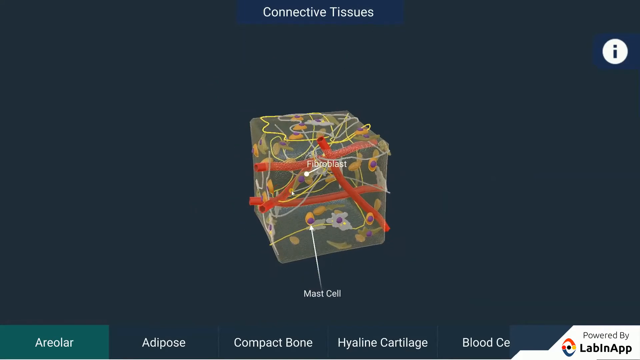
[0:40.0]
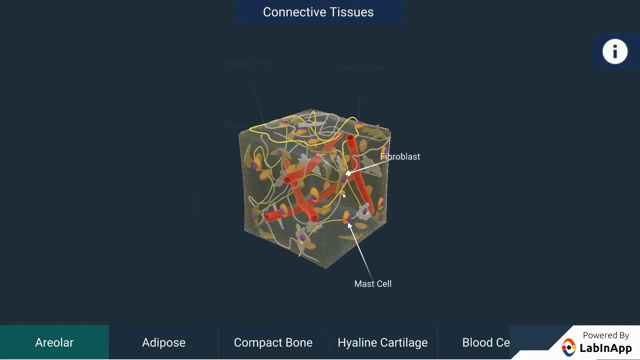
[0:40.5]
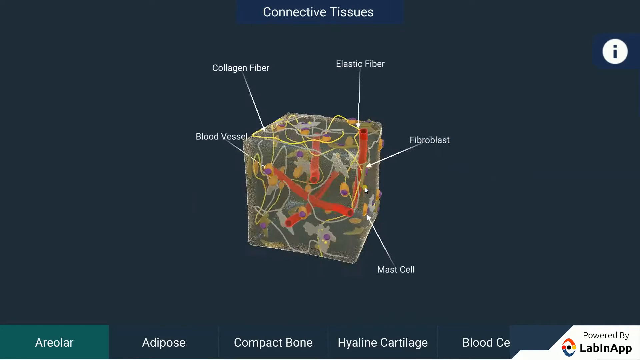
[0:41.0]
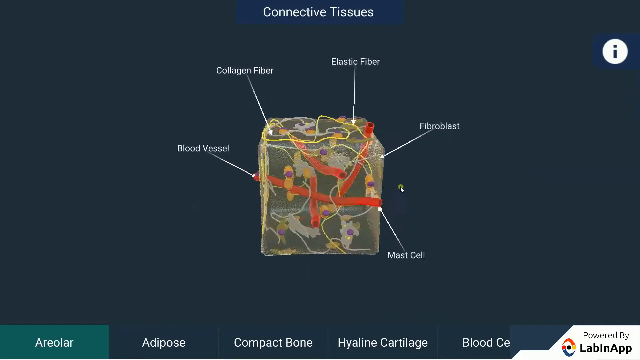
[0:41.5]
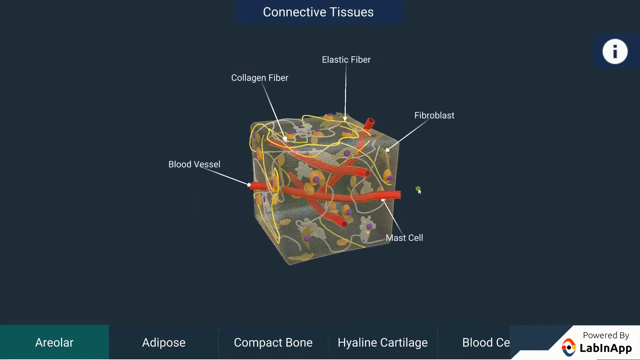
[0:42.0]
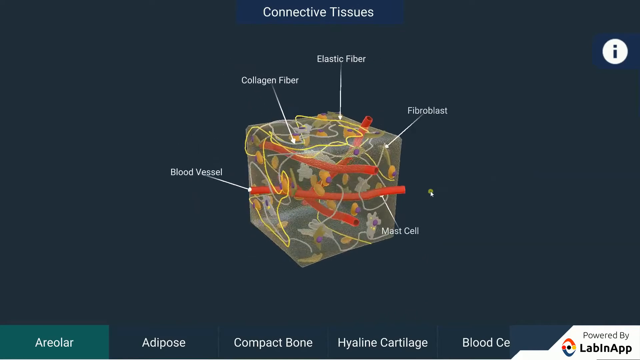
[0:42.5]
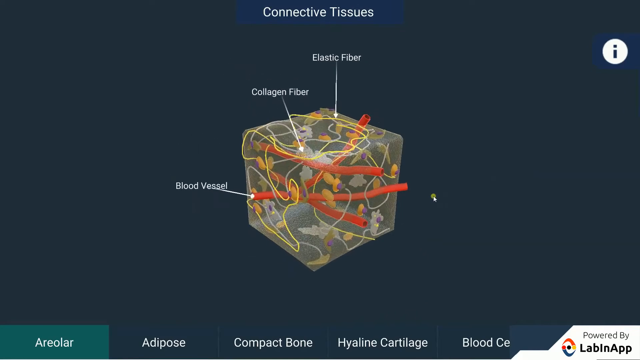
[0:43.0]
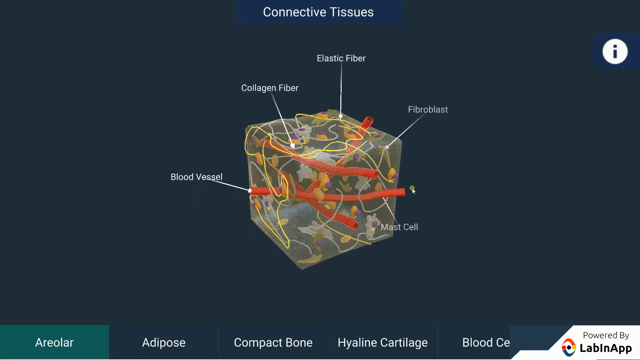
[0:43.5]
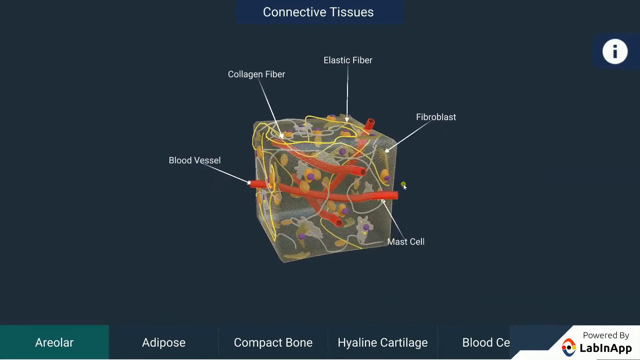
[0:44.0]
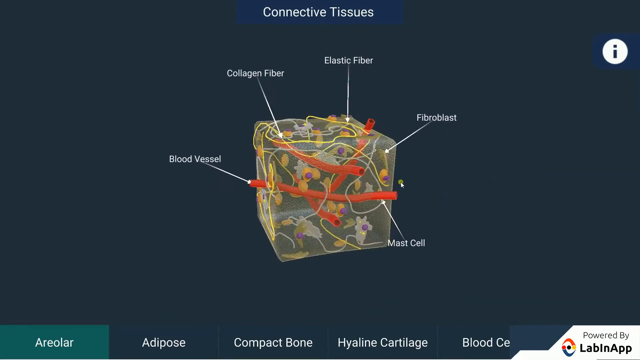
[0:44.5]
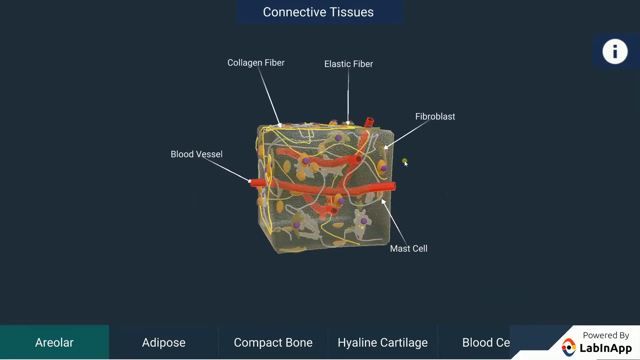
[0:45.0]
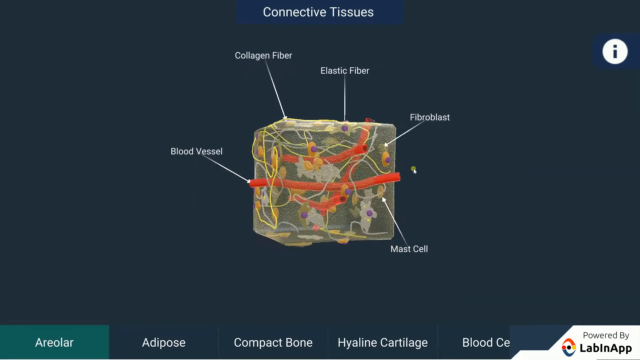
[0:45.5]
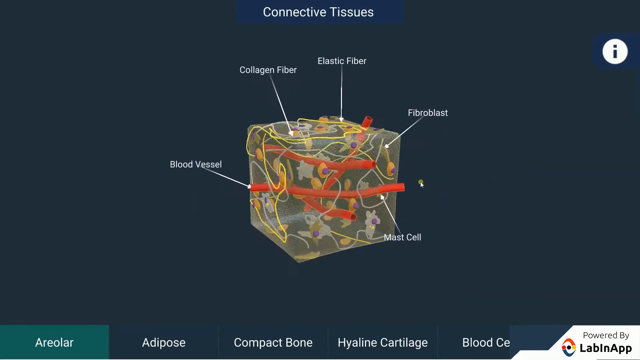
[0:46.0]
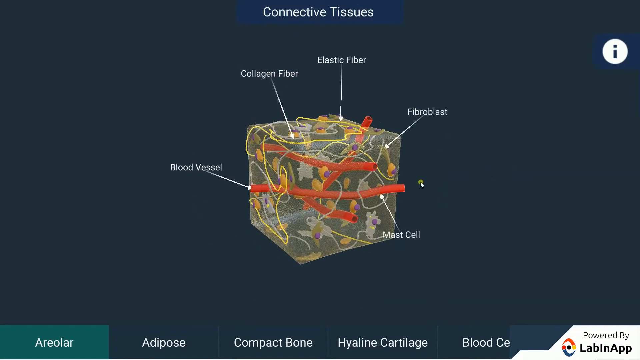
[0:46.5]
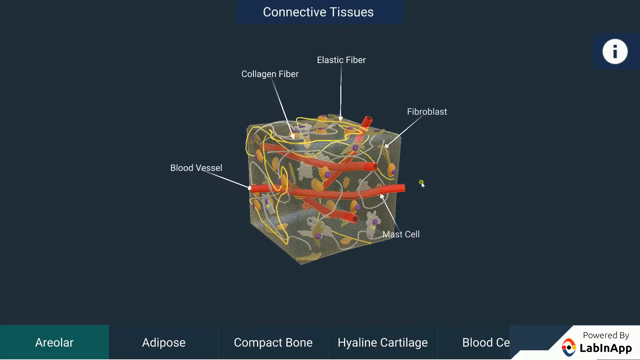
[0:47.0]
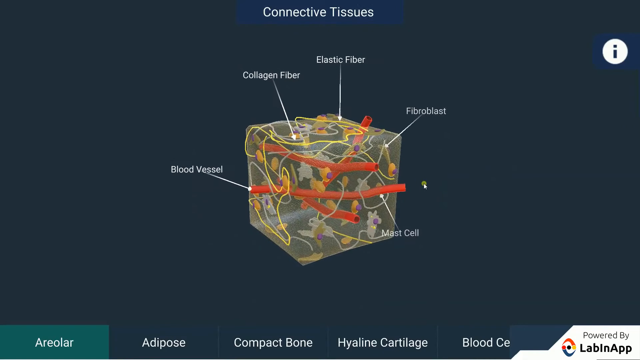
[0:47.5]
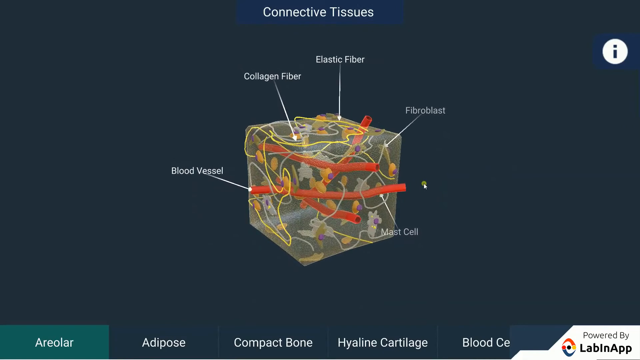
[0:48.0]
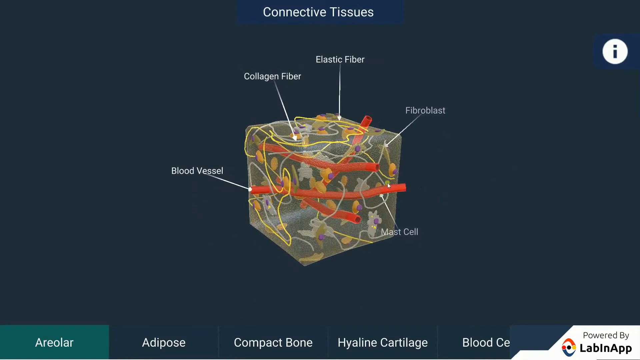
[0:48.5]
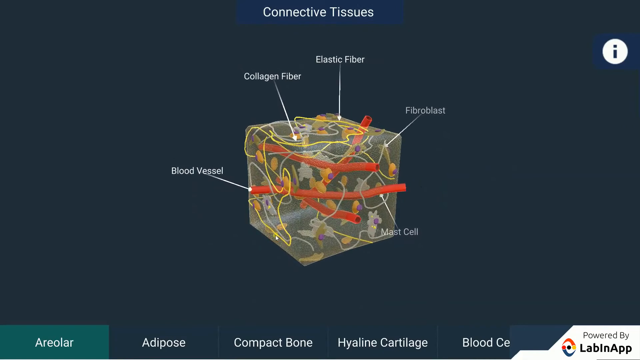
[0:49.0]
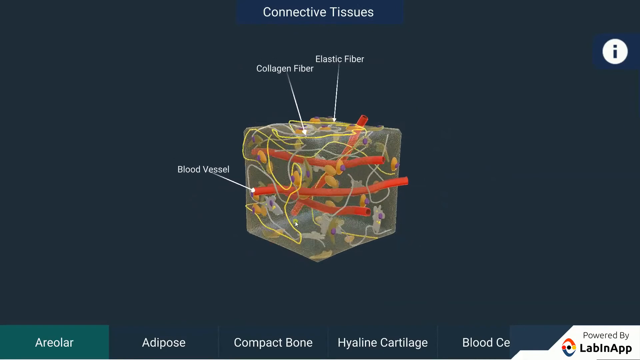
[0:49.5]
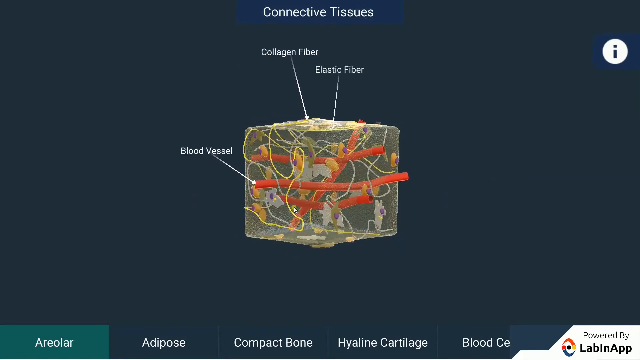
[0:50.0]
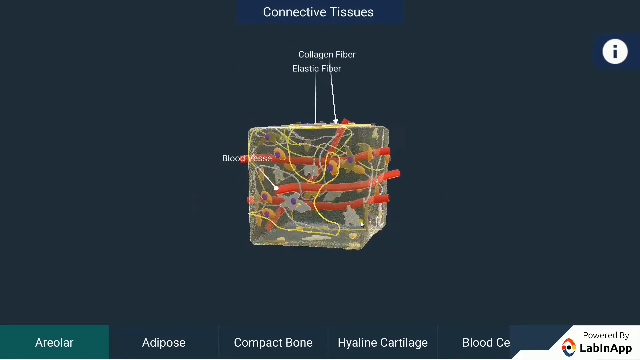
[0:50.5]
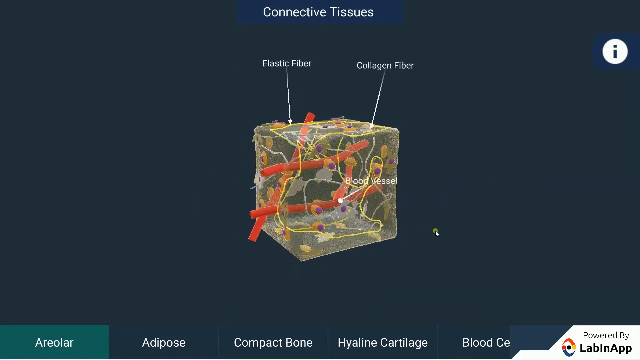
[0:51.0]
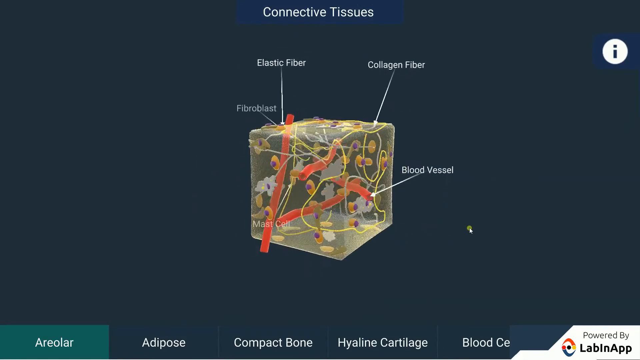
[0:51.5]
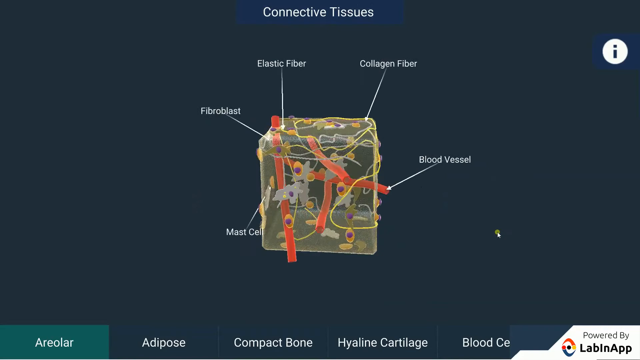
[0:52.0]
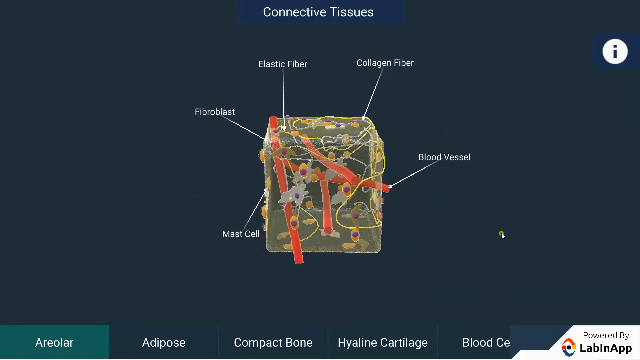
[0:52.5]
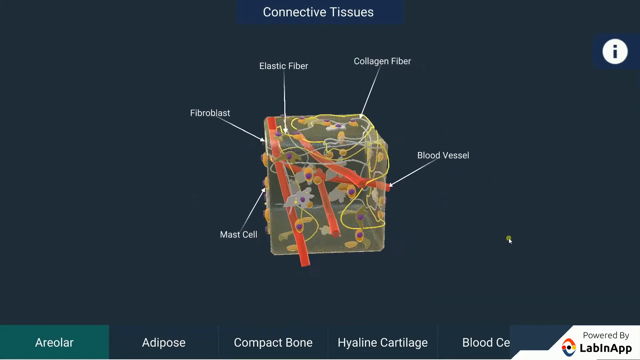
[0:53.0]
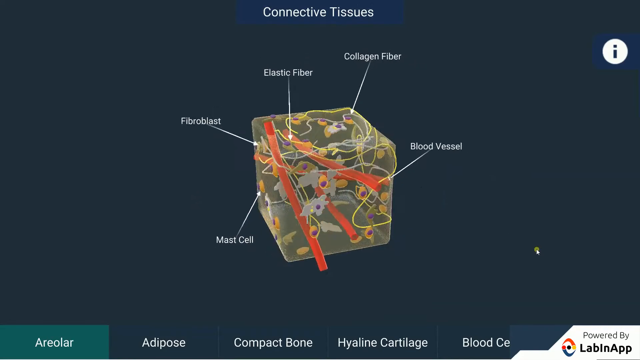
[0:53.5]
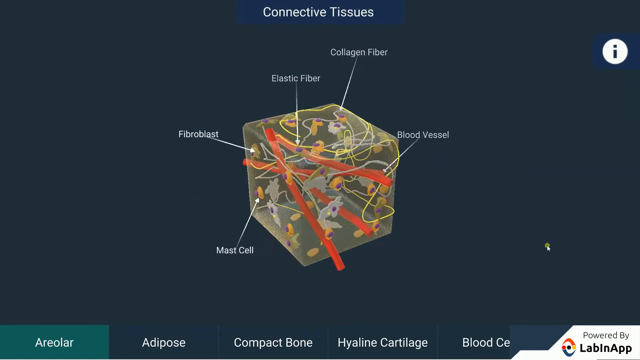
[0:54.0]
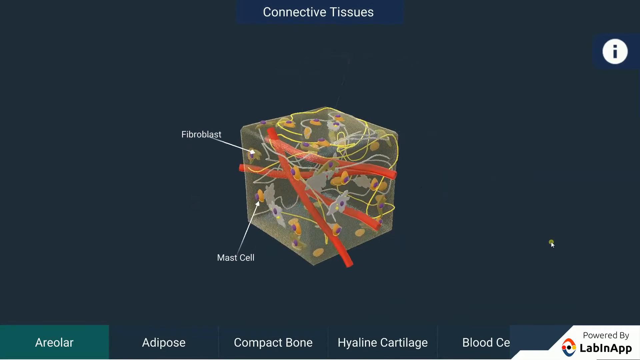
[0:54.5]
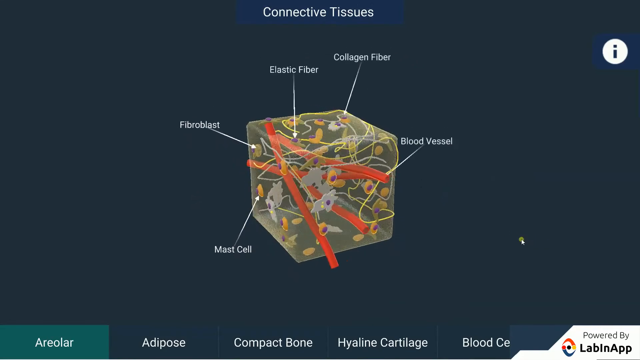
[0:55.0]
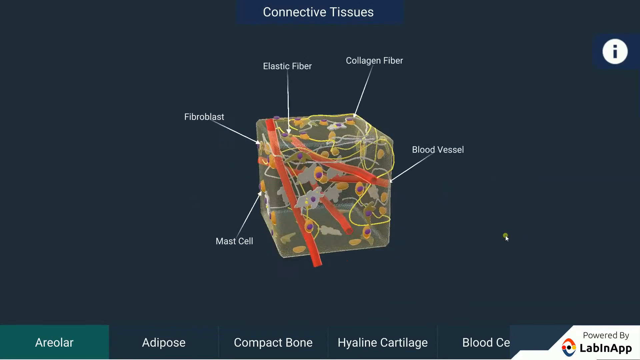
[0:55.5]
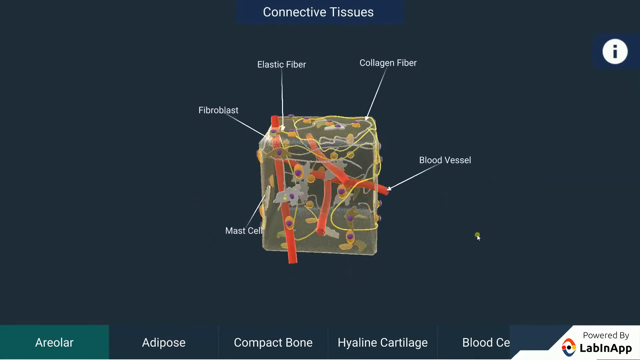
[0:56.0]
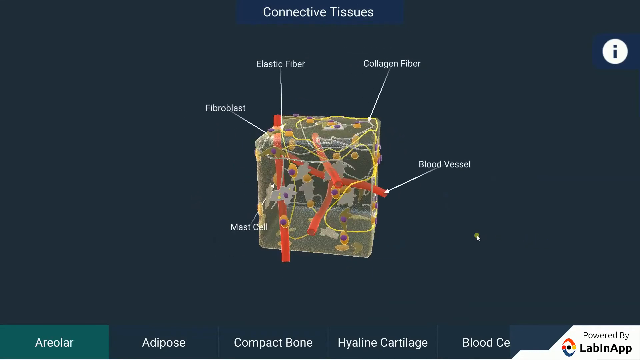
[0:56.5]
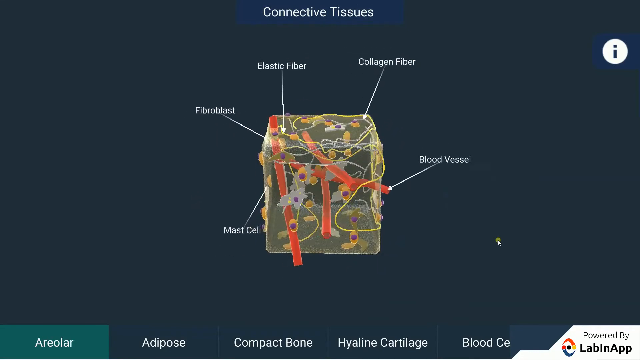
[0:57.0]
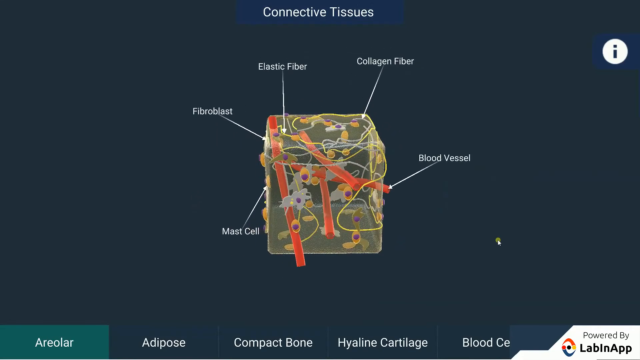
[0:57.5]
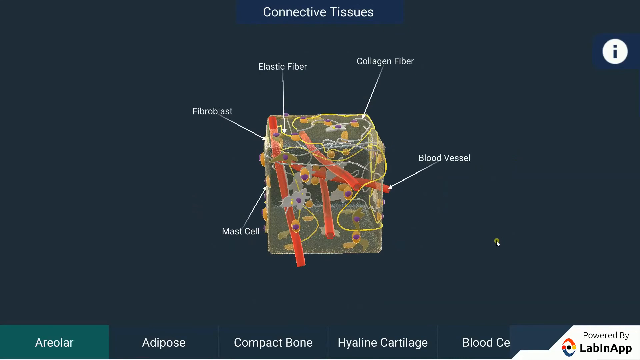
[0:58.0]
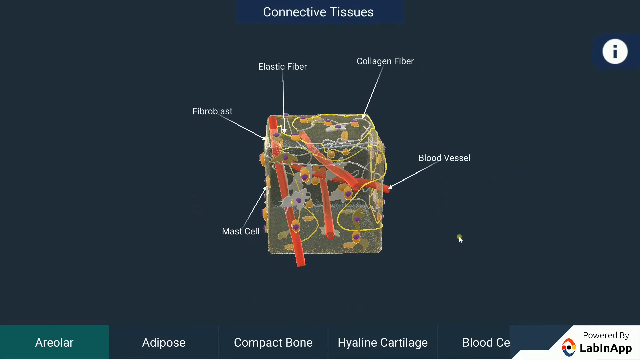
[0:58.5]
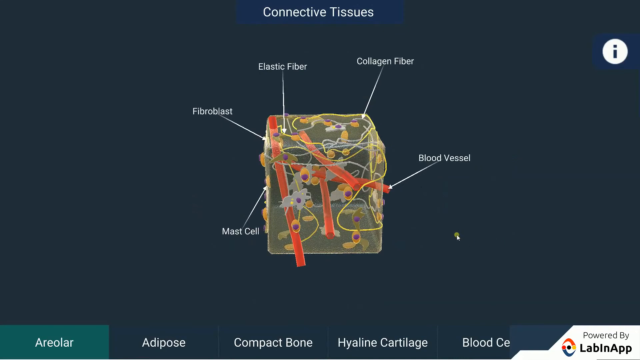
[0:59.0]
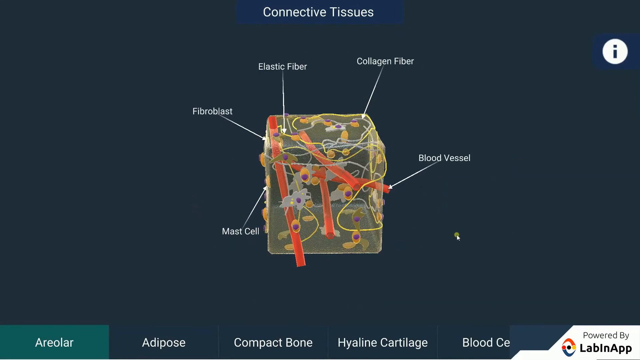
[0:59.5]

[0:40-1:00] The 3D model of the cube shows several organelles, with more text pointing to different positions within the tissue. The labels from the beginning reappear: "Blood Vessel," "Collagen Fiber," "Elastic Fiber," "Fibroblast" and "Mast Cell." The cursor keeps rotating the figure. Labels left behind disappear and reappear as the camera approaches the organelles they point to.